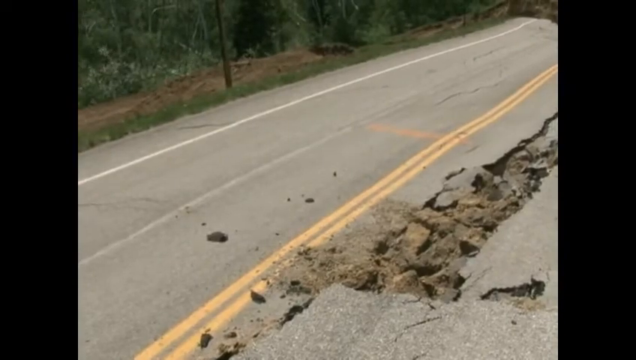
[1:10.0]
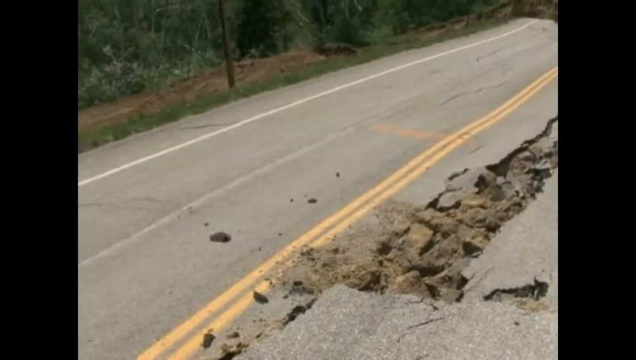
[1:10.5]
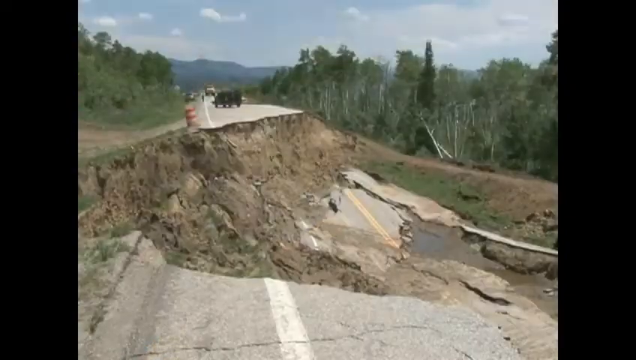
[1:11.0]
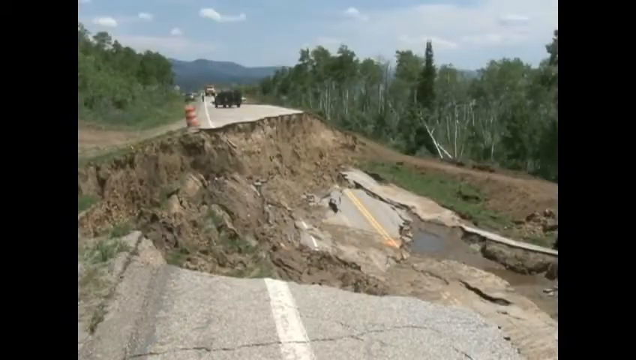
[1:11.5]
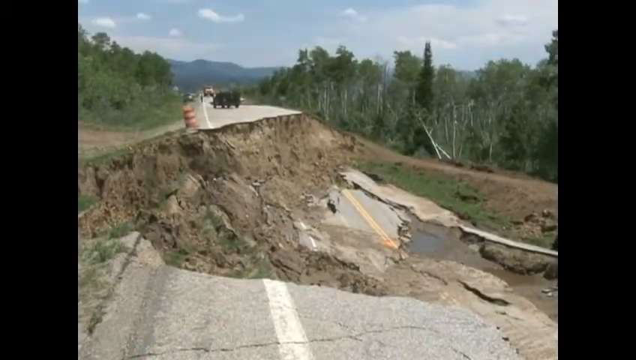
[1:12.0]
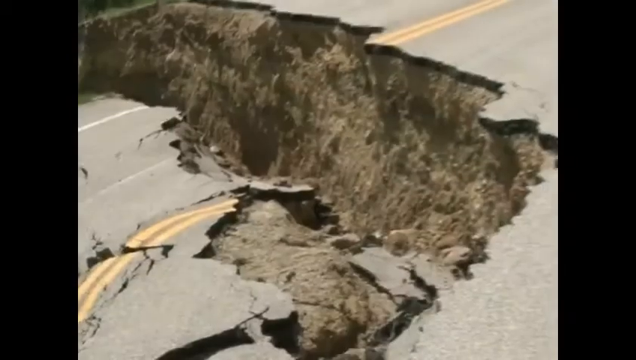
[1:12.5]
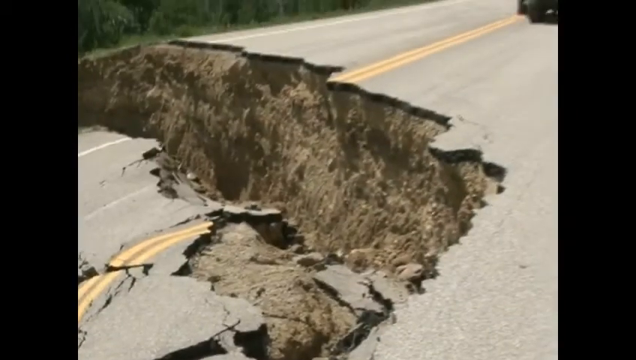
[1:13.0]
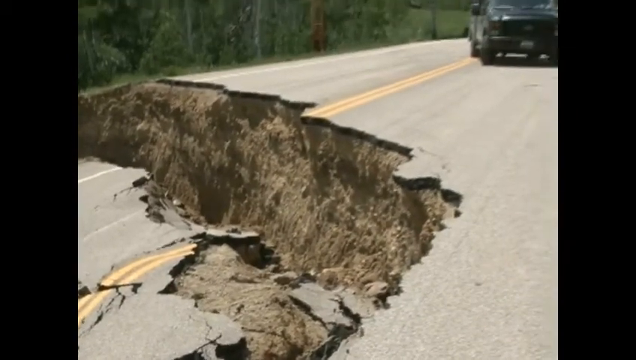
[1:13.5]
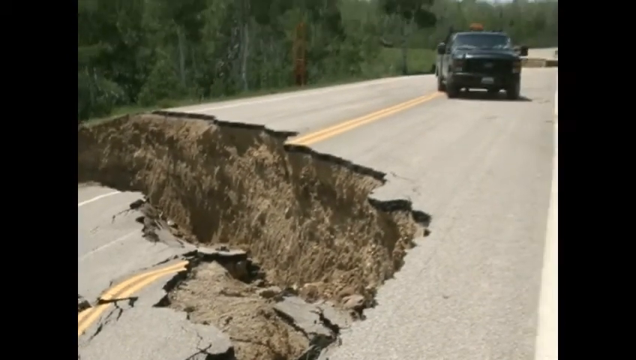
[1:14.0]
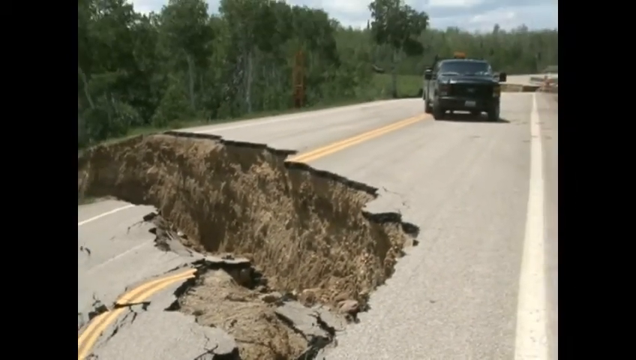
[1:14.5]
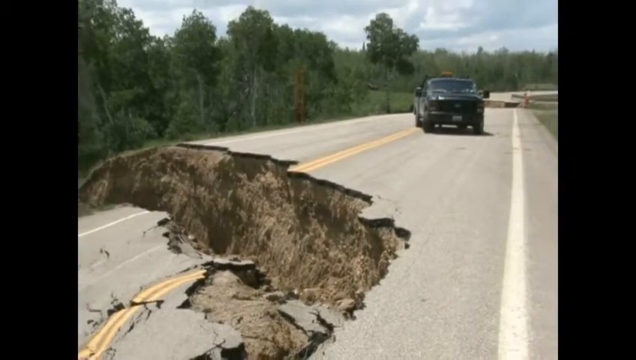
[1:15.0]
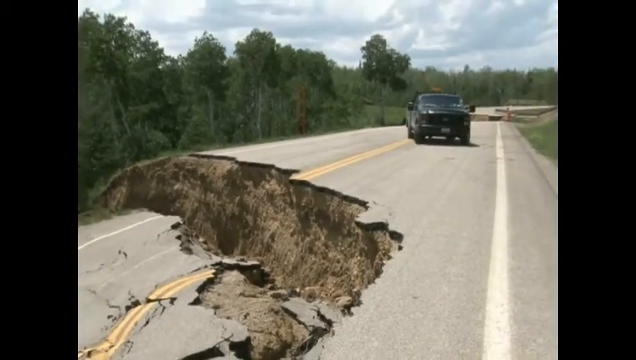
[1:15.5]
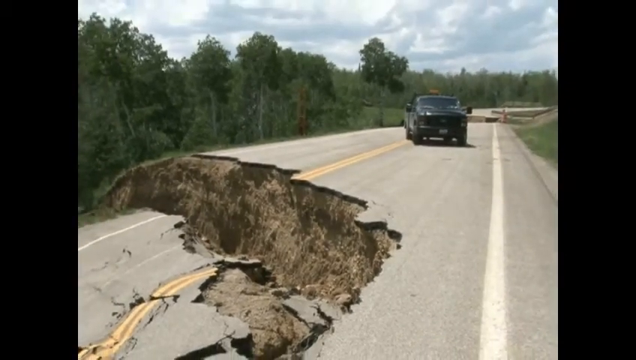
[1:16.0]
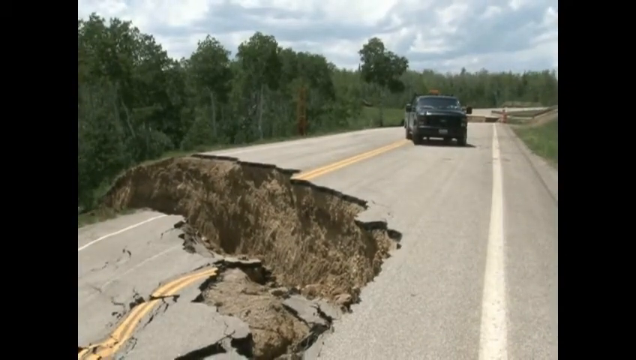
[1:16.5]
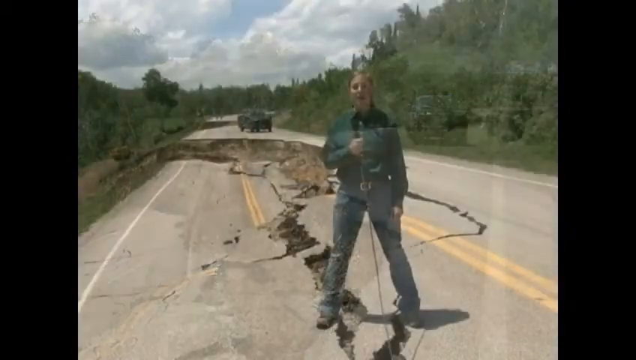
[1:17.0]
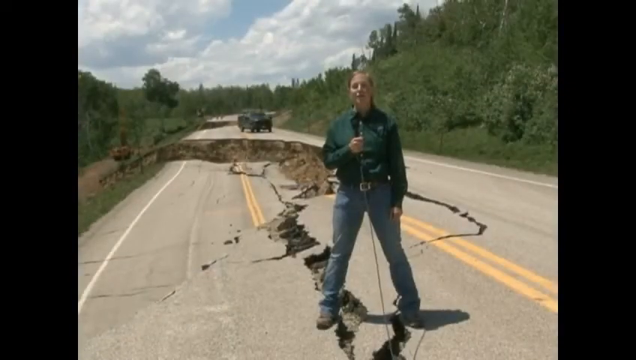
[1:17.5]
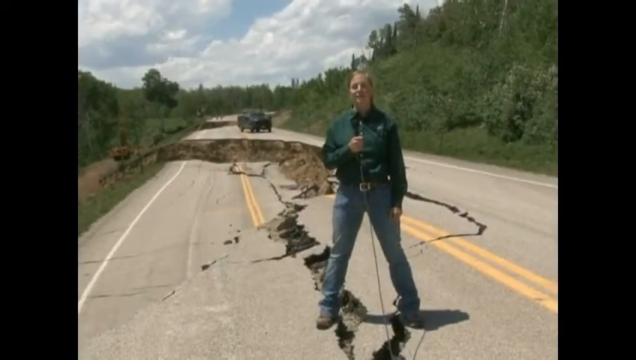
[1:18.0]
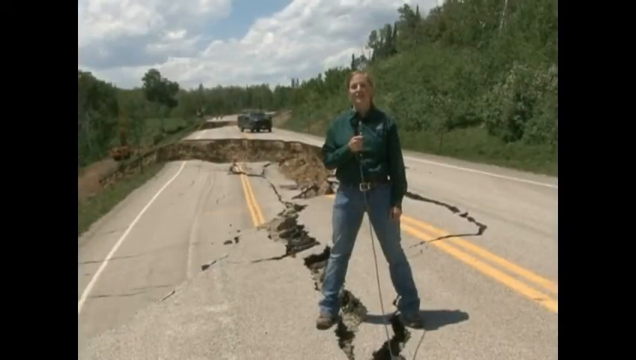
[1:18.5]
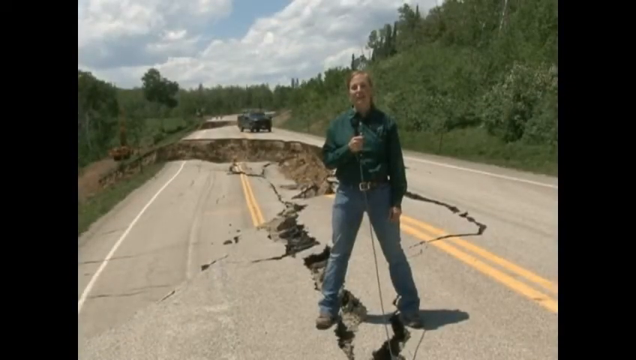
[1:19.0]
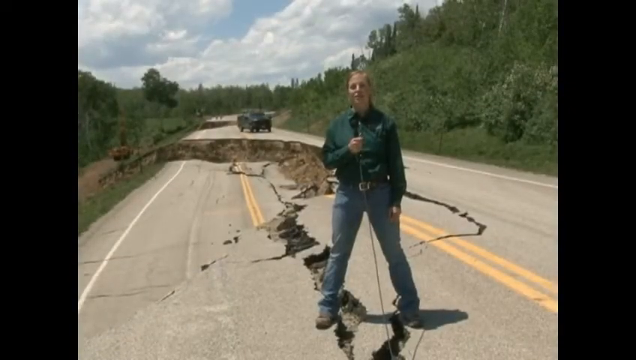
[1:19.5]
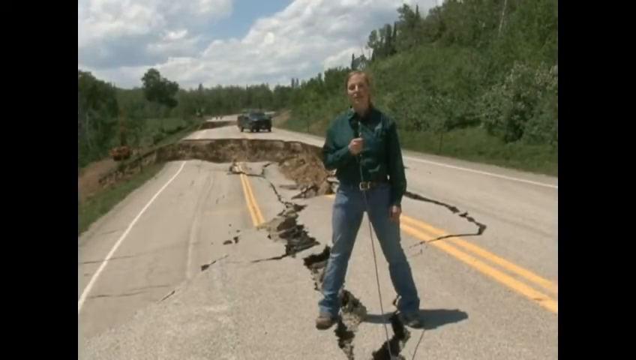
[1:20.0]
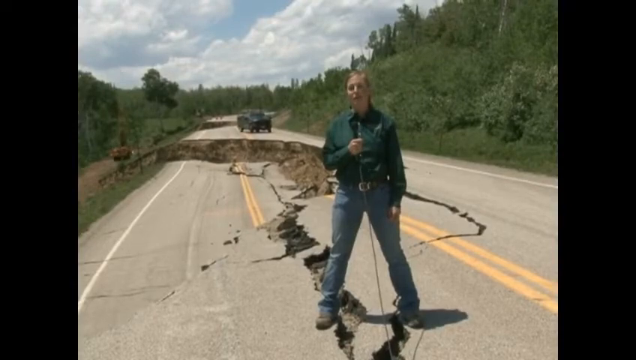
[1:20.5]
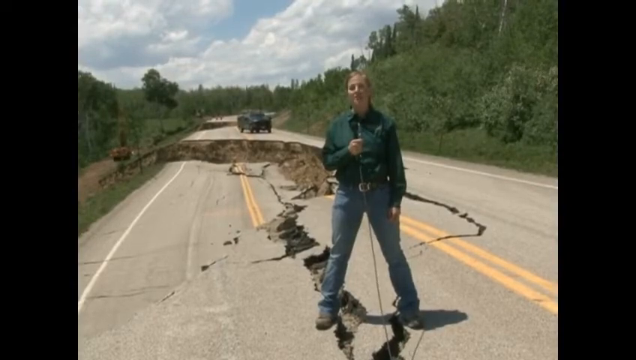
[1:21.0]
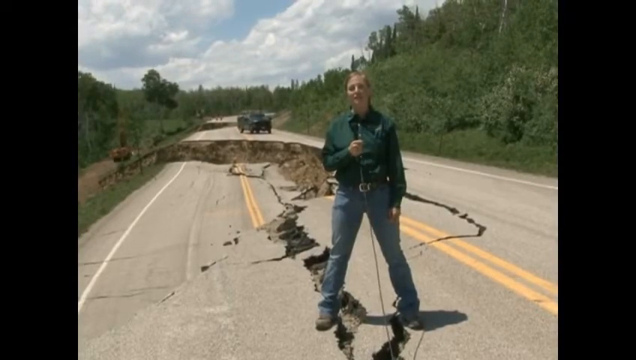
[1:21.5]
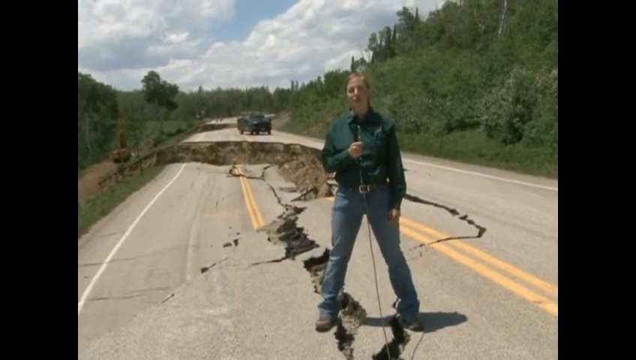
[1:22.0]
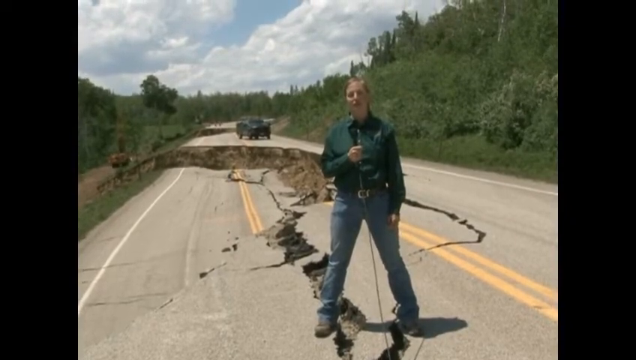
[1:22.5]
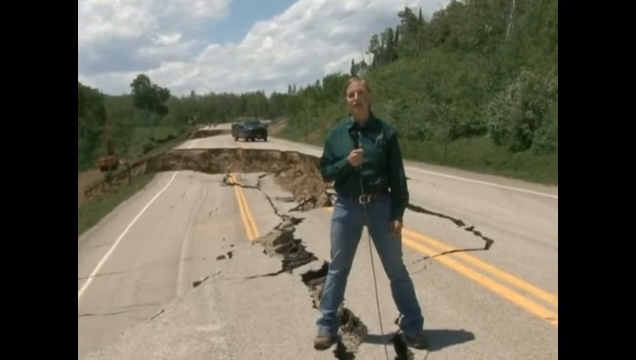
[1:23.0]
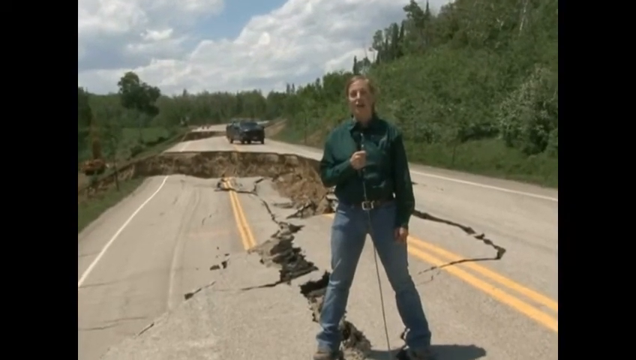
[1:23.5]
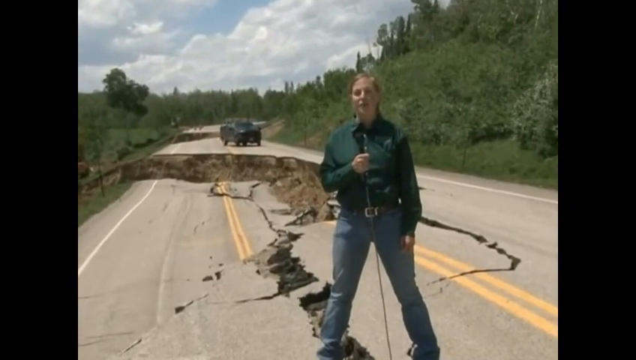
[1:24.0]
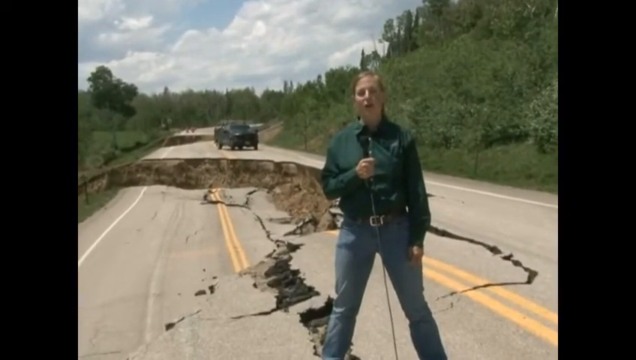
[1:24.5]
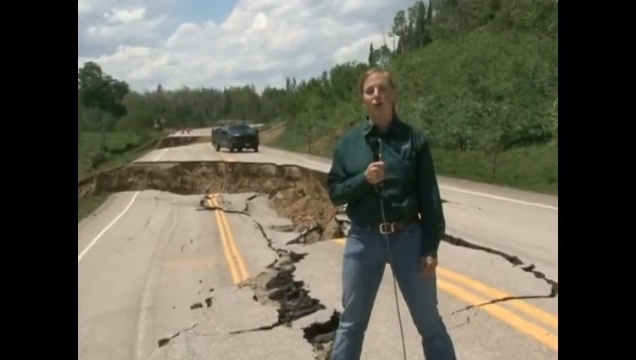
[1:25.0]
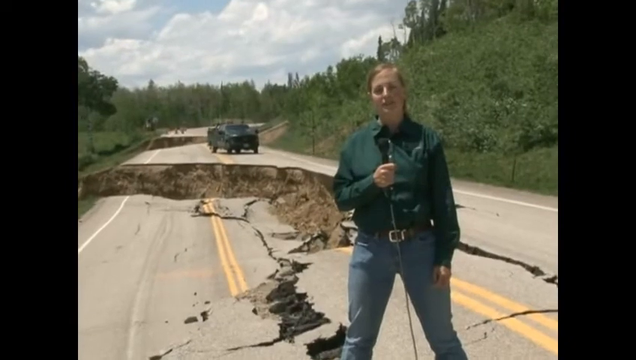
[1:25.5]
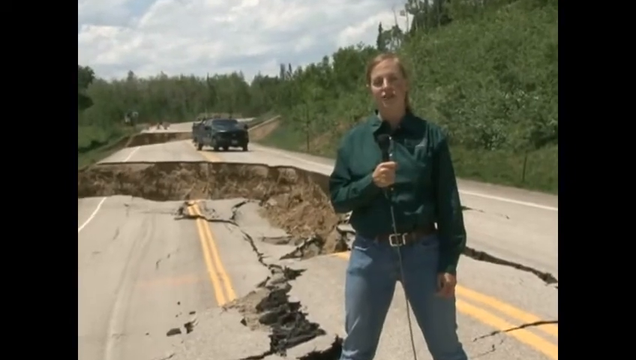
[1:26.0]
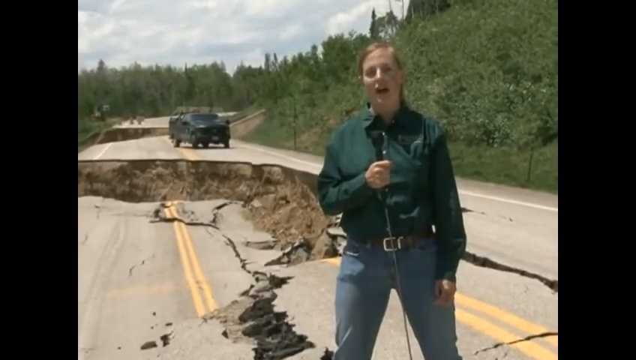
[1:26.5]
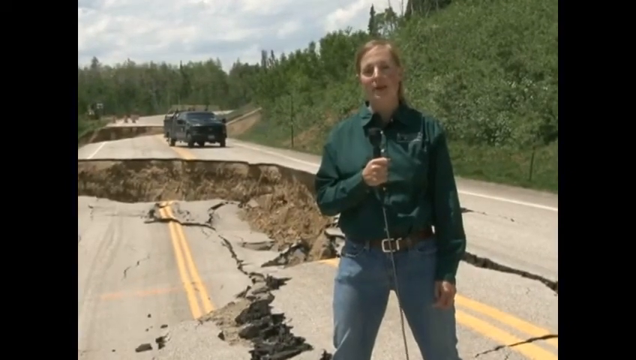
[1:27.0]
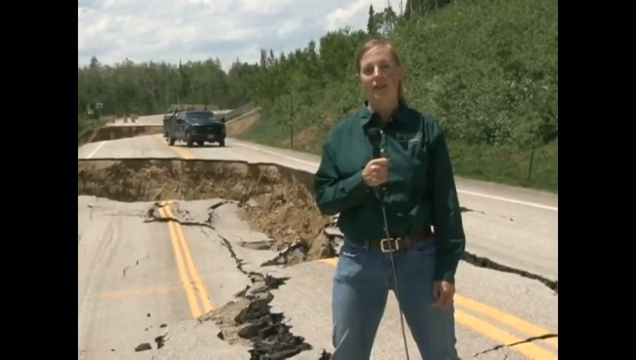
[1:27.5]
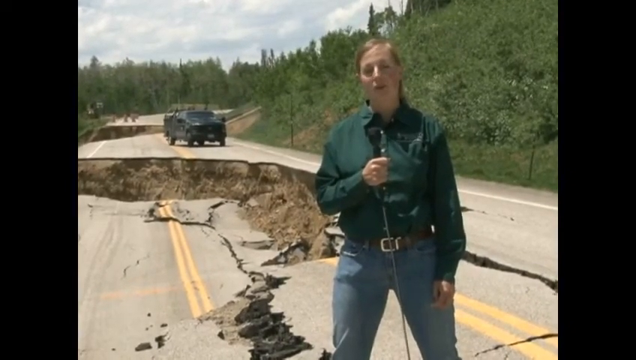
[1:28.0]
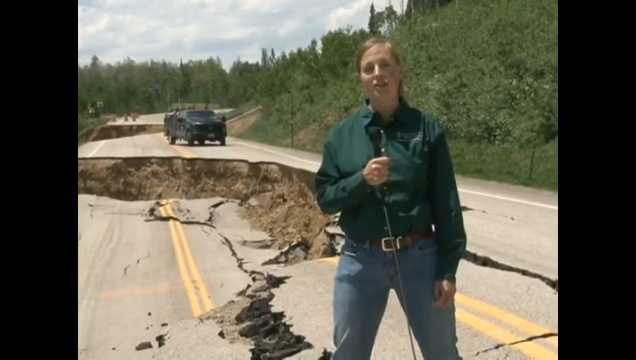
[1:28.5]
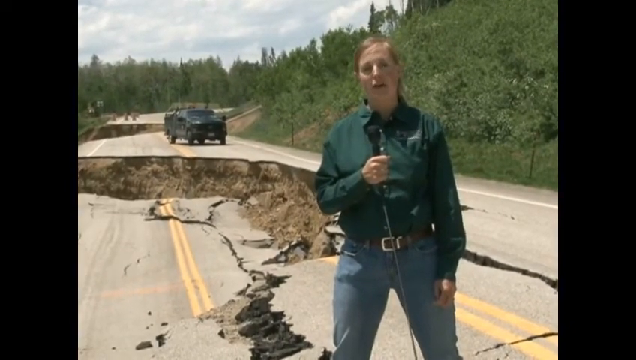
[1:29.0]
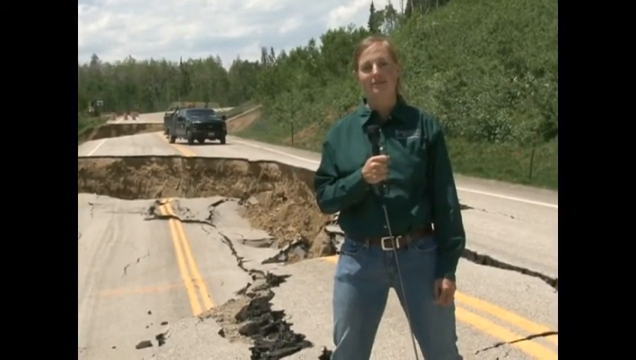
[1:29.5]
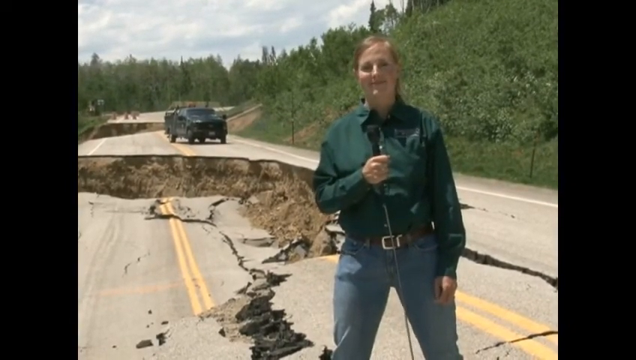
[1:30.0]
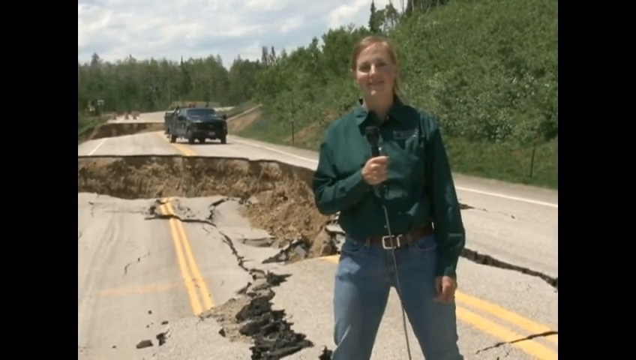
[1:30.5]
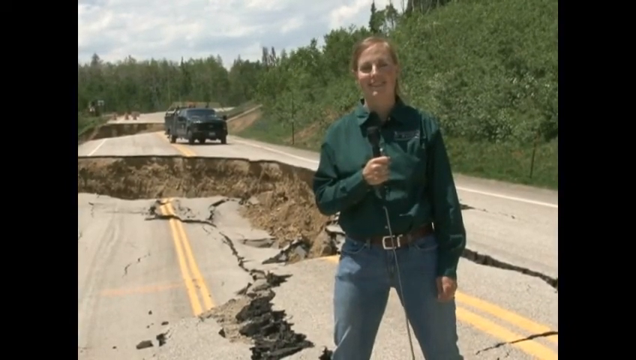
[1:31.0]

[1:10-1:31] More shots survey the damage to the road. The section that has collapsed and fallen off the side of the road is probably one or possibly two car lengths long. The video then returns to the woman in the green shirt and pants, who now has a corded microphone.